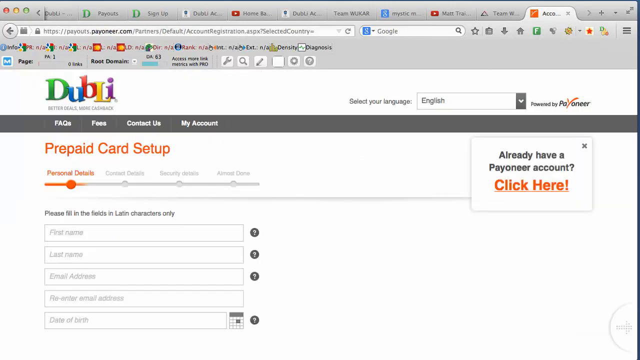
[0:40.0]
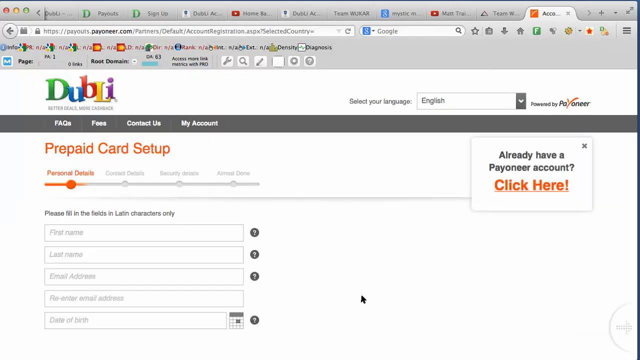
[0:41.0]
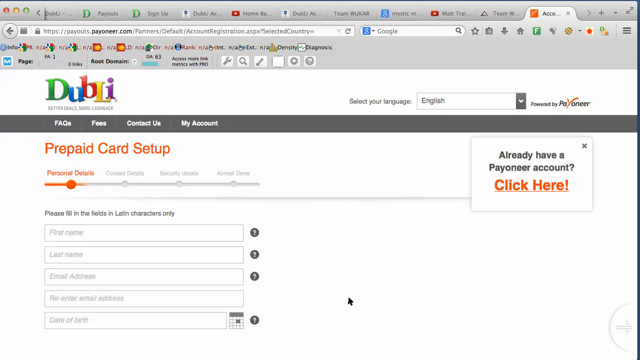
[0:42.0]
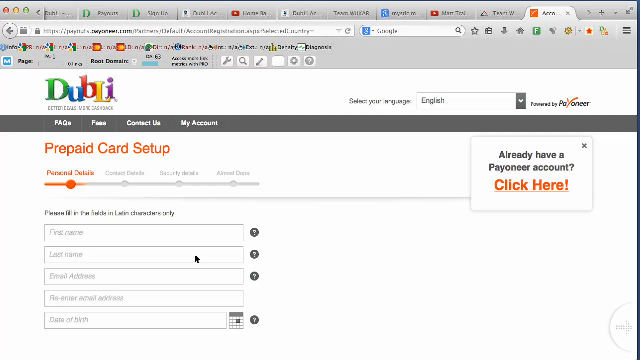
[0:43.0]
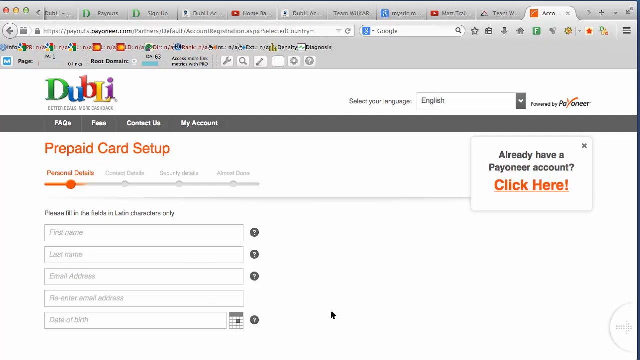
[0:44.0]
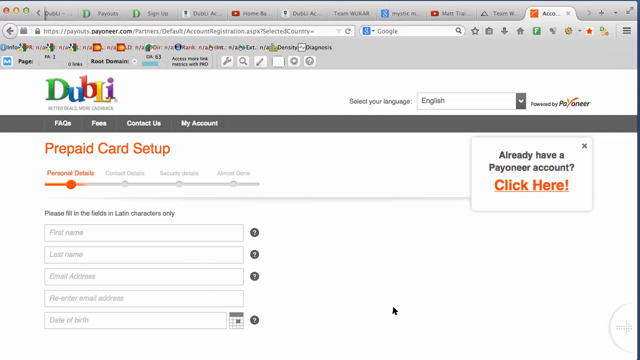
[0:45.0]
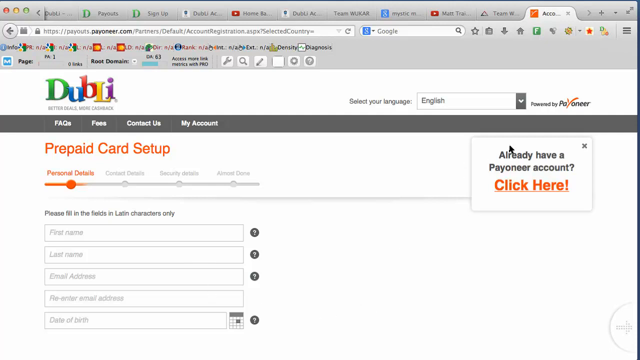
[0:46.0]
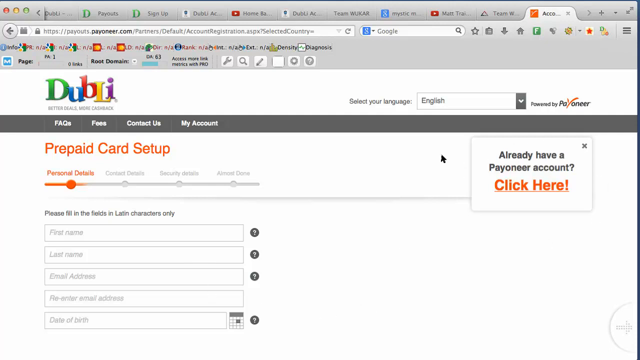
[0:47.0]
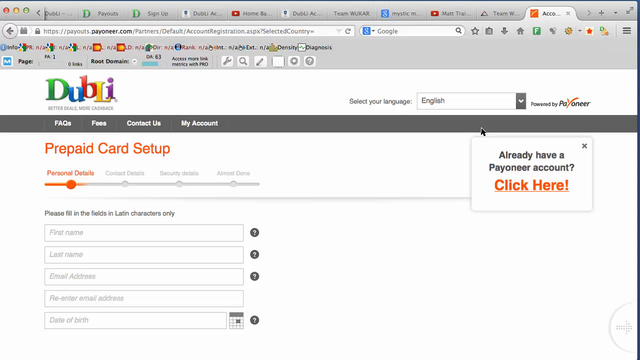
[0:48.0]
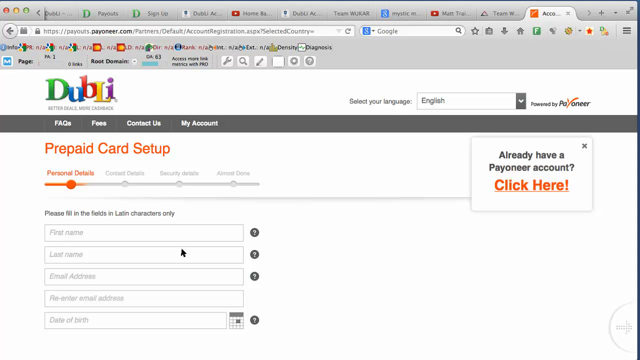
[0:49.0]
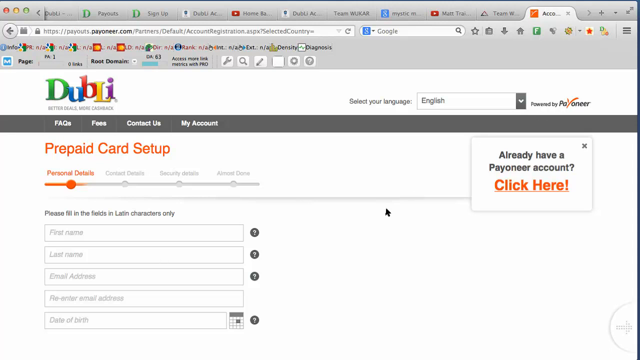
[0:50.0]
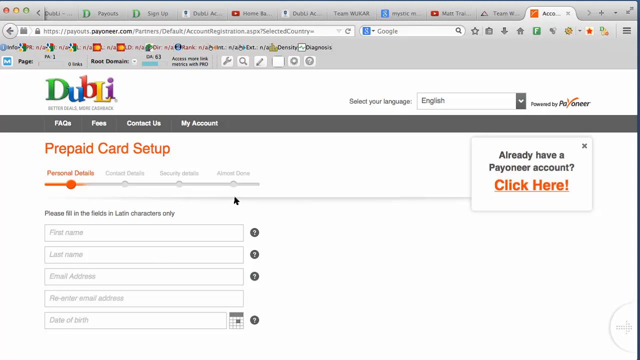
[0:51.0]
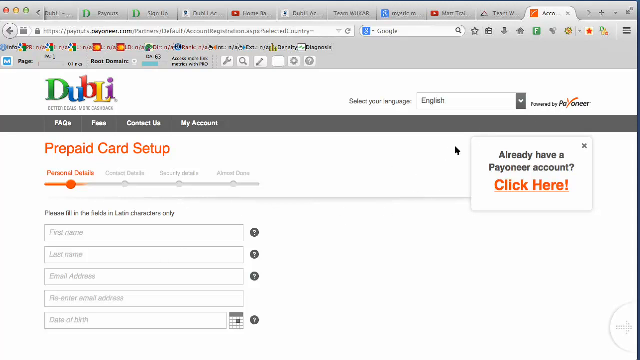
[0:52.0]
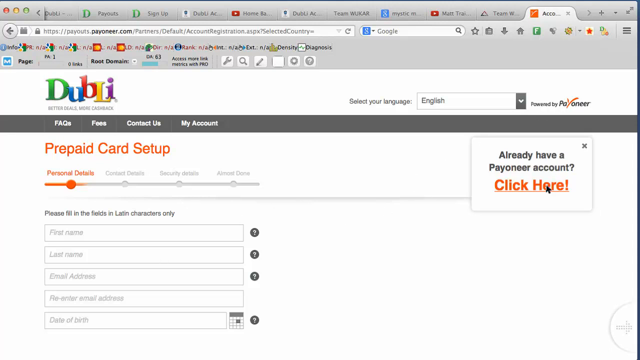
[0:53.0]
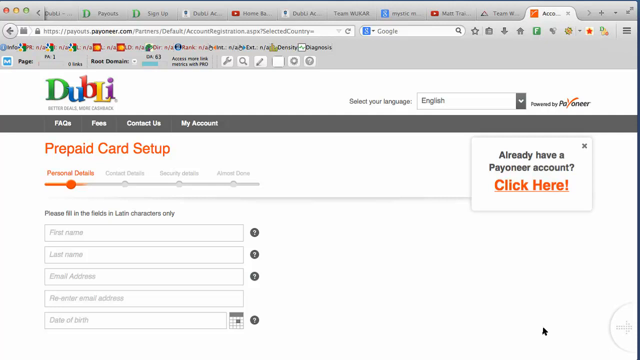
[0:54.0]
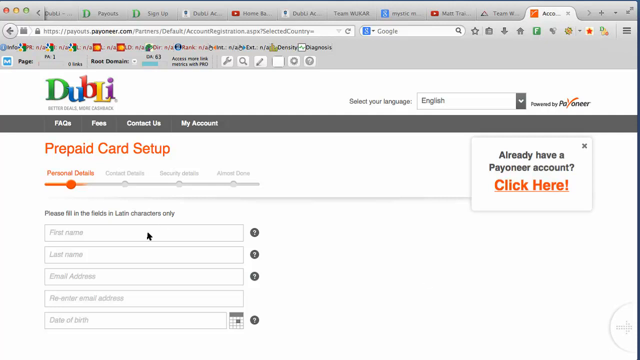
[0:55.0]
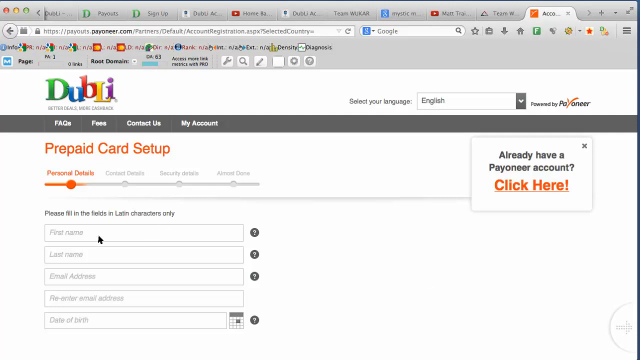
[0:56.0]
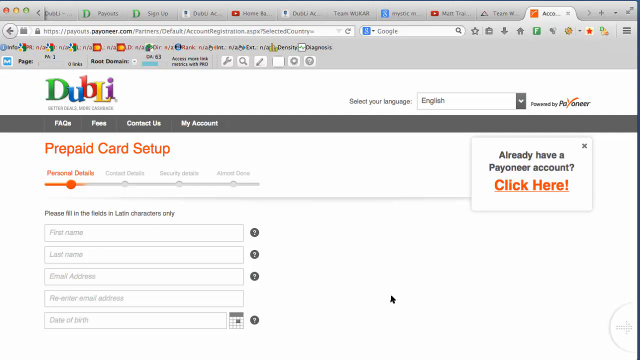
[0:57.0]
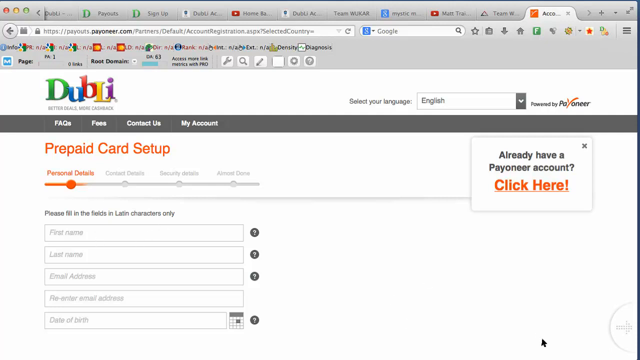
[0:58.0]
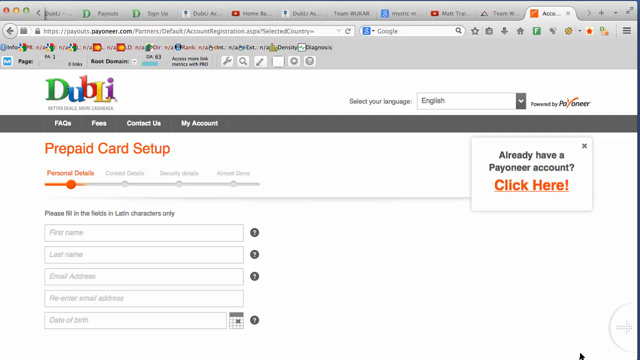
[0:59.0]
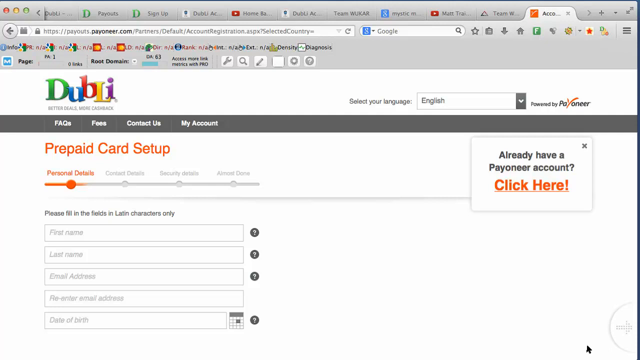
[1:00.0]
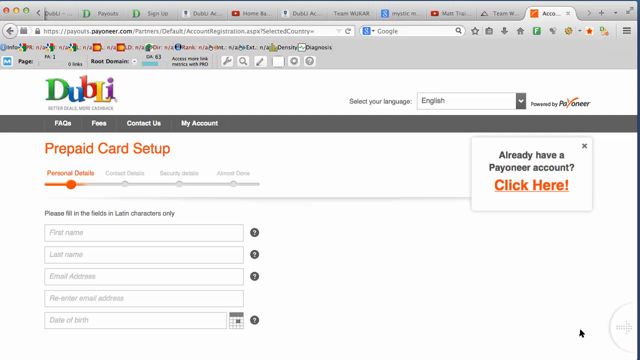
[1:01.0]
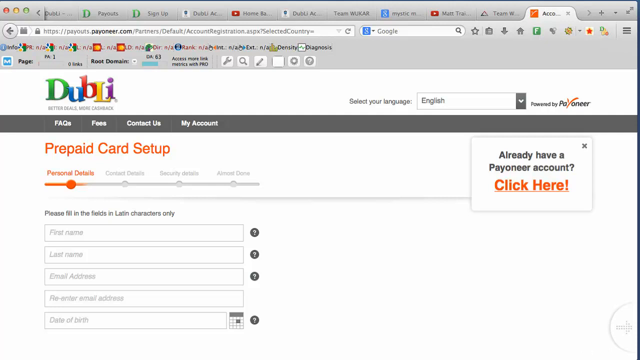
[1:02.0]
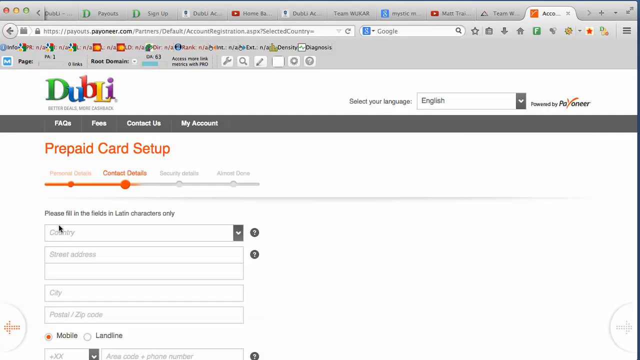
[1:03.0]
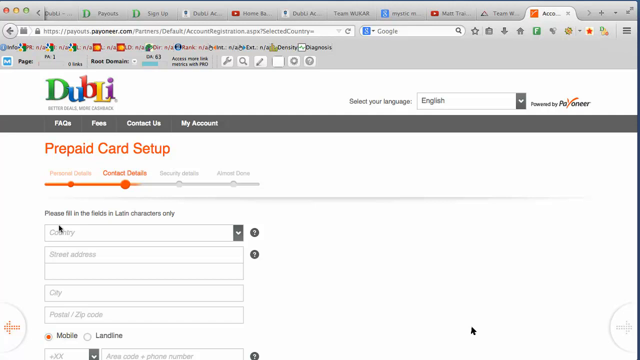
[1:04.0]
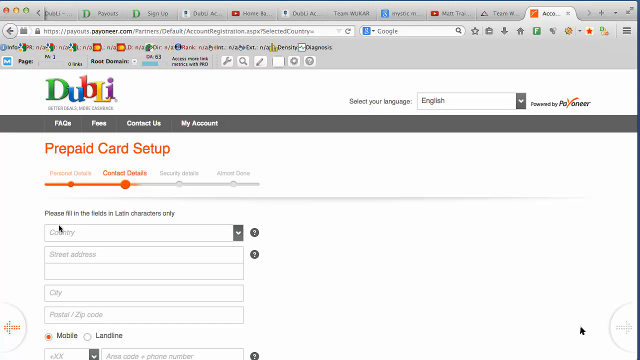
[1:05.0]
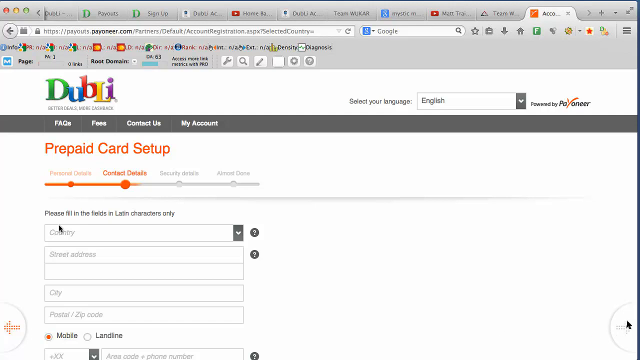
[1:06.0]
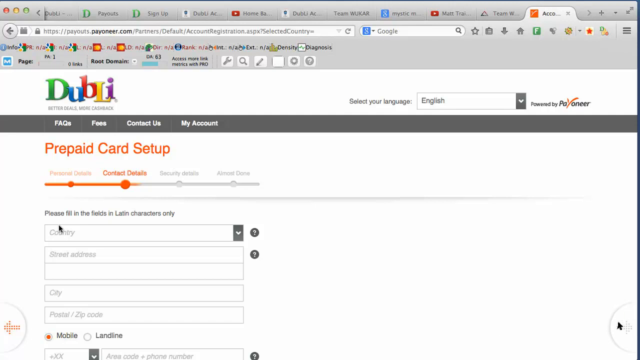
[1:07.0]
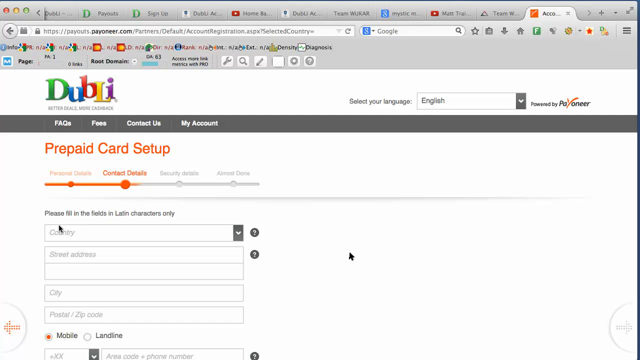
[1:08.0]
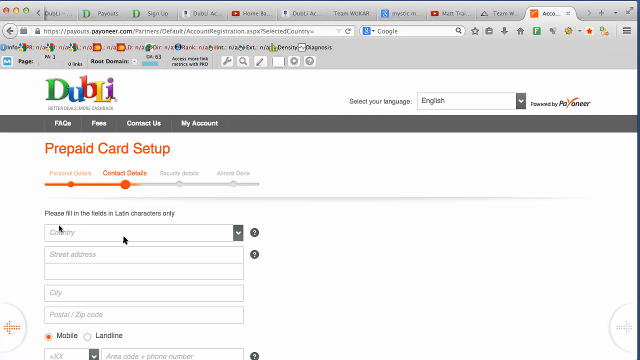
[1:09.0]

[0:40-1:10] Still on the website, the page shows "prepaid card setup" in orange. The first section has a small heading that possibly reads personal details or personal information, and underneath it in gray is "please fill in the fields" followed by a word, possibly Latin, and "characters only." There are fields for first name, last name and email address, and possibly a confirm email address field. On the right side it says "already have a Payoneer account," and in orange, underlined, is "click here." Above that is "select your language," set to English. The mouse cursor hovers around and circles the "click here" area and the first name field.